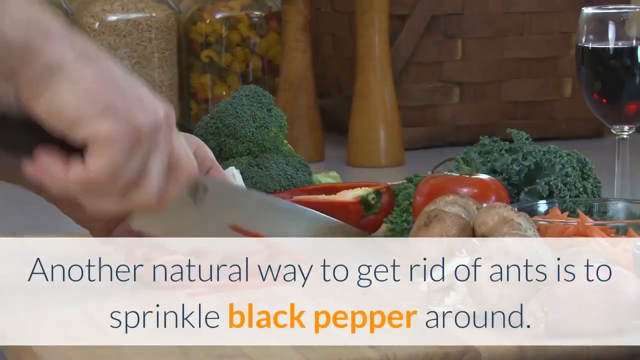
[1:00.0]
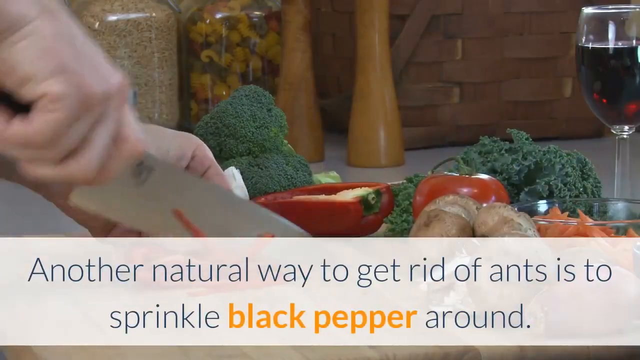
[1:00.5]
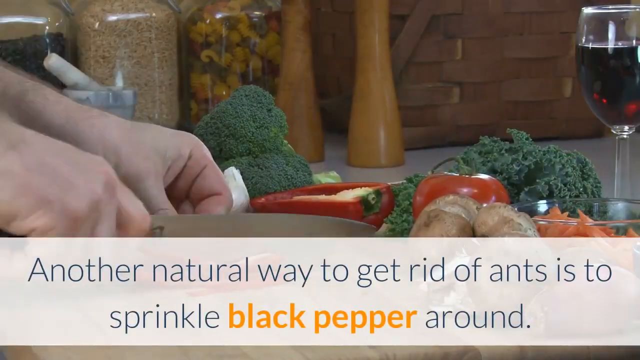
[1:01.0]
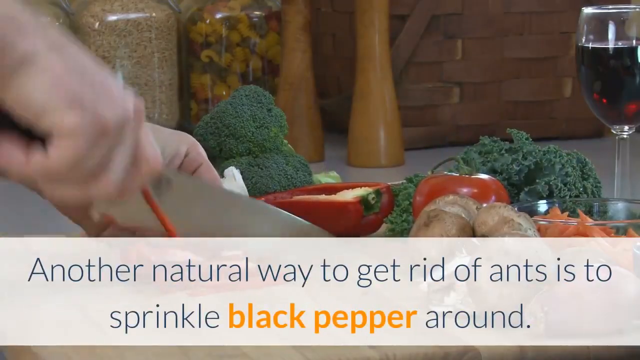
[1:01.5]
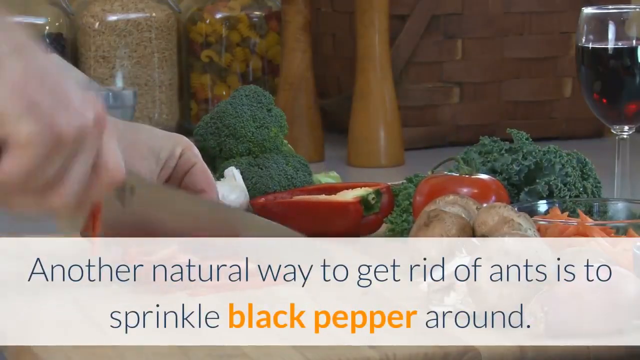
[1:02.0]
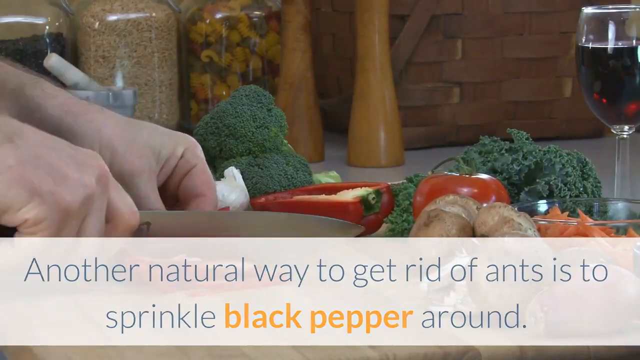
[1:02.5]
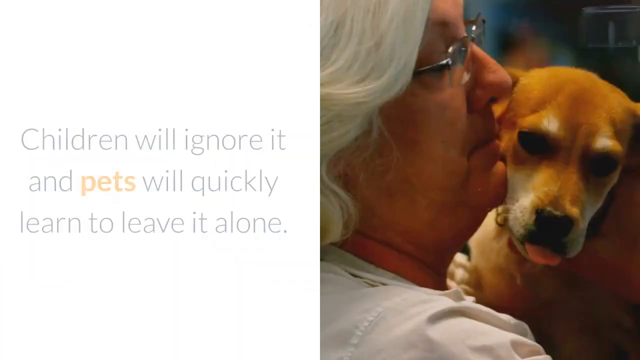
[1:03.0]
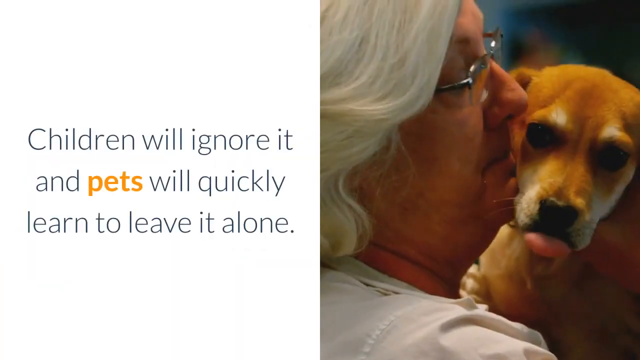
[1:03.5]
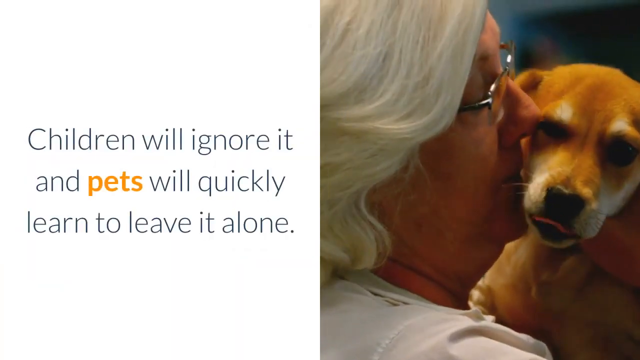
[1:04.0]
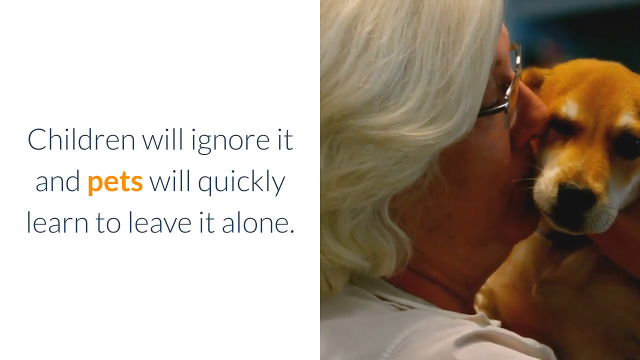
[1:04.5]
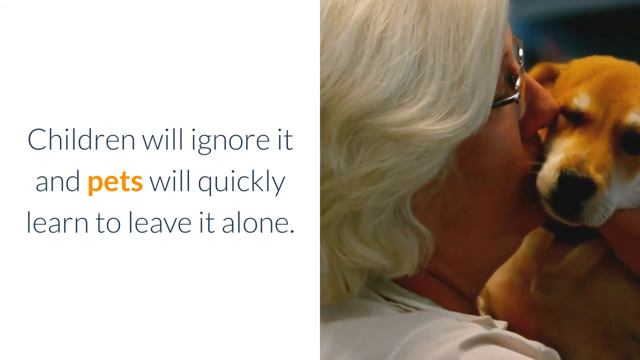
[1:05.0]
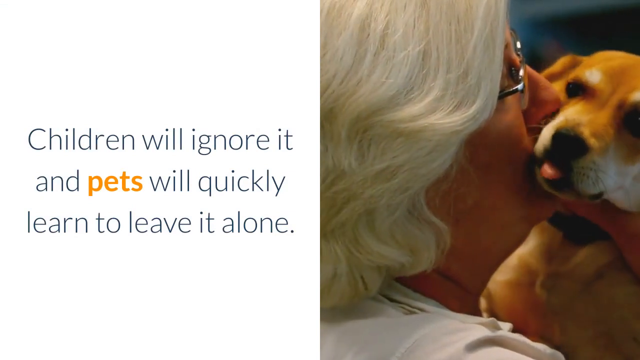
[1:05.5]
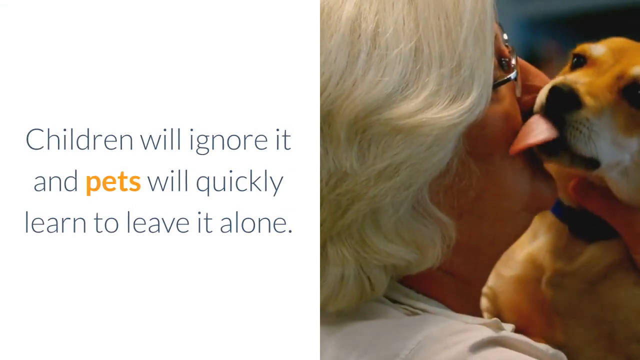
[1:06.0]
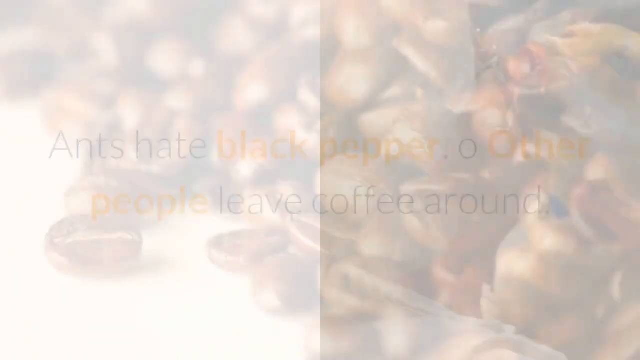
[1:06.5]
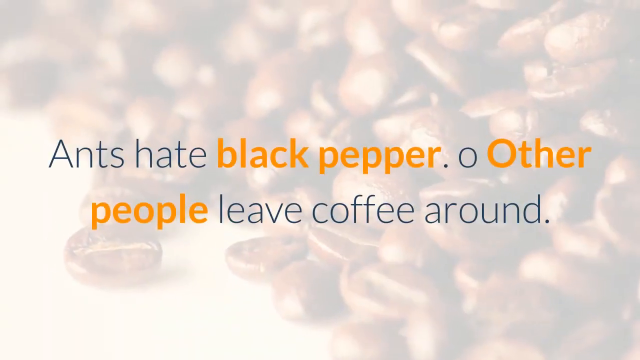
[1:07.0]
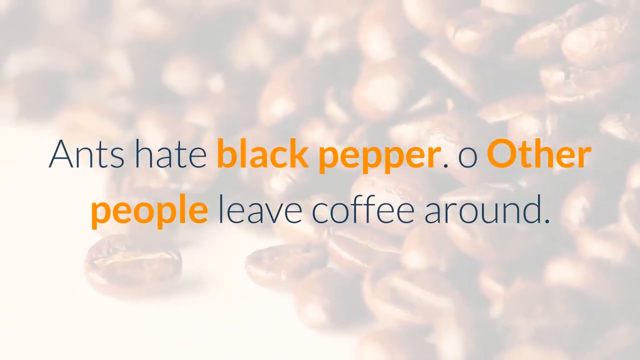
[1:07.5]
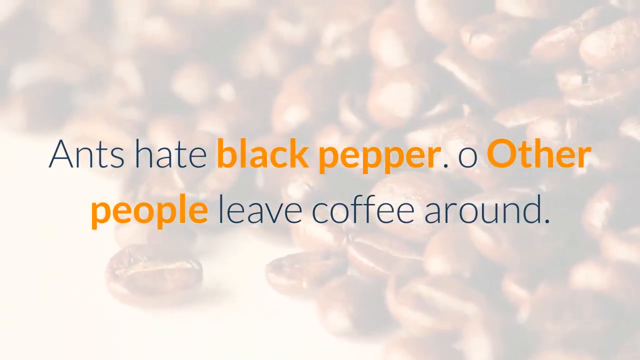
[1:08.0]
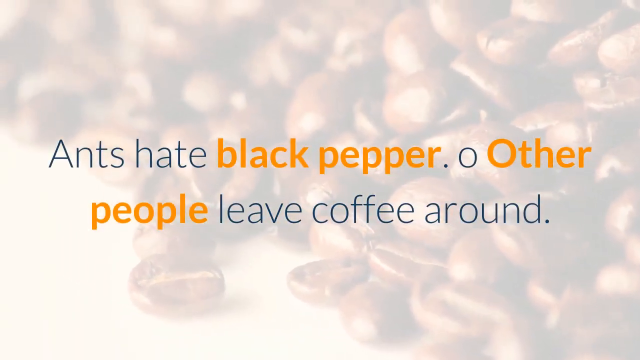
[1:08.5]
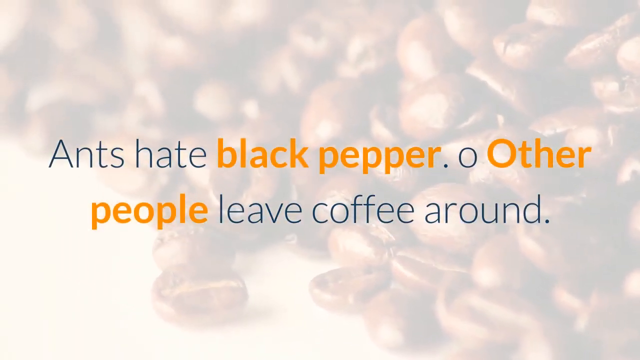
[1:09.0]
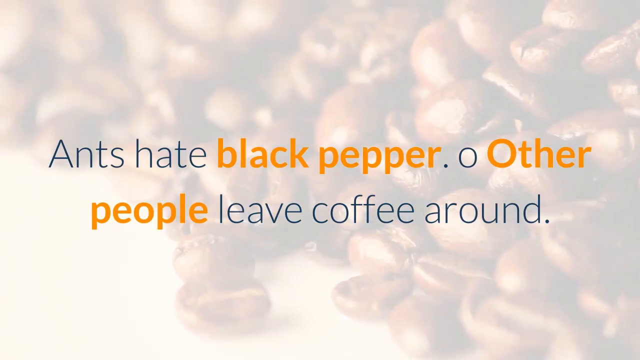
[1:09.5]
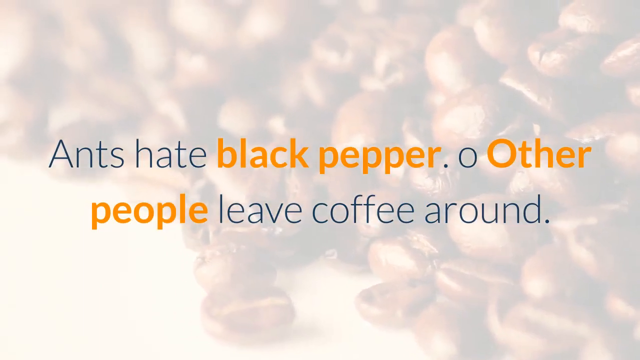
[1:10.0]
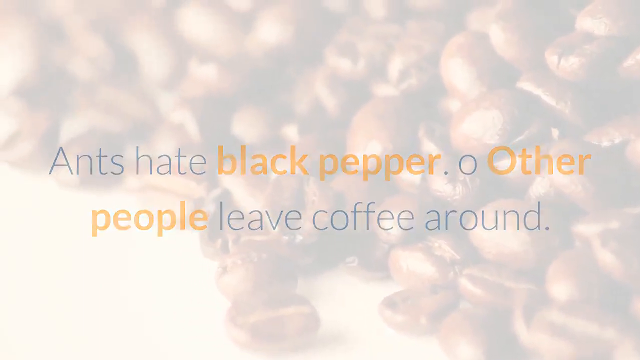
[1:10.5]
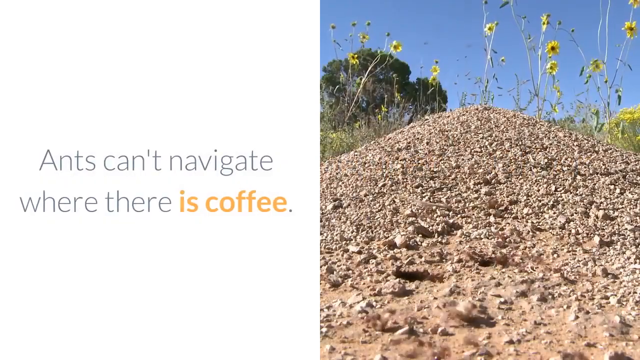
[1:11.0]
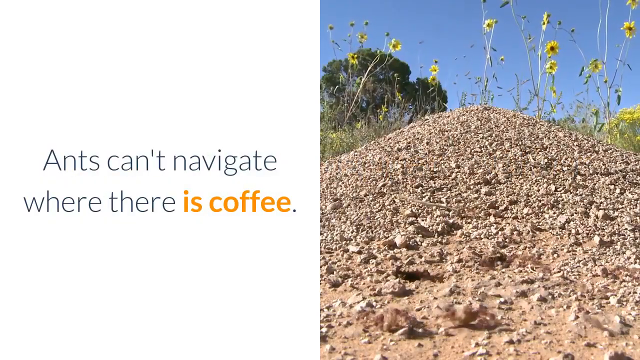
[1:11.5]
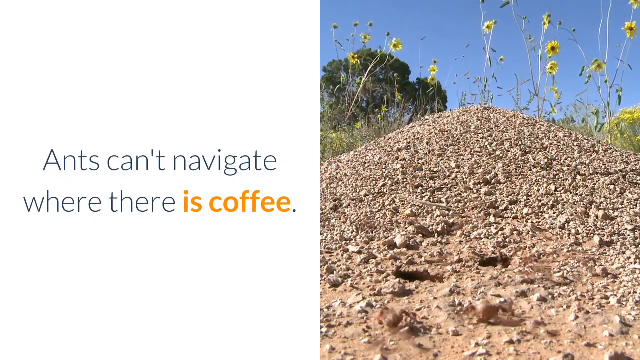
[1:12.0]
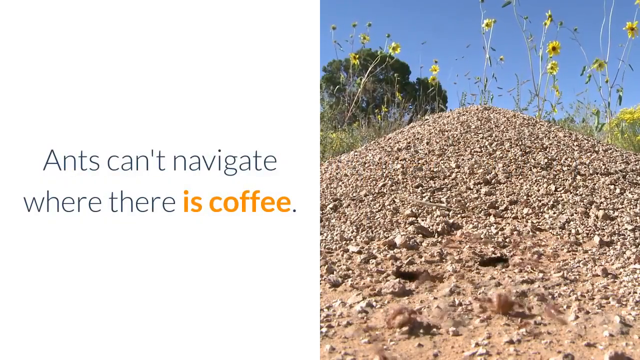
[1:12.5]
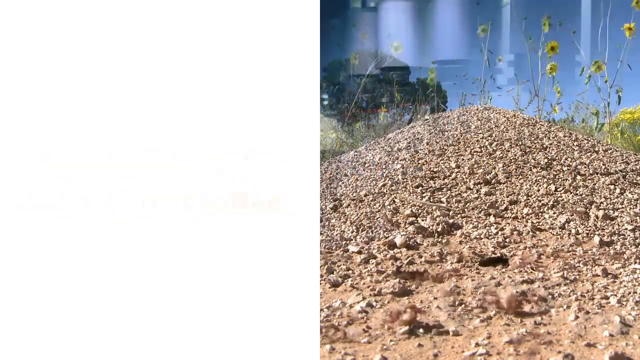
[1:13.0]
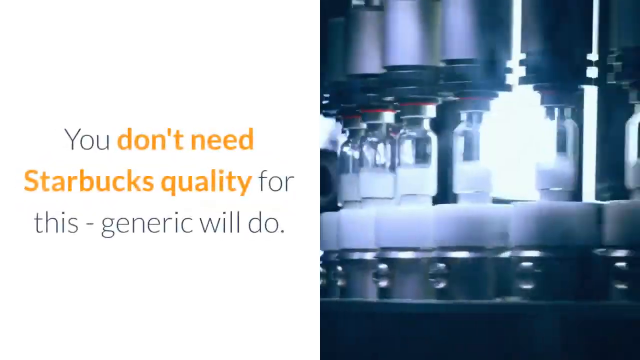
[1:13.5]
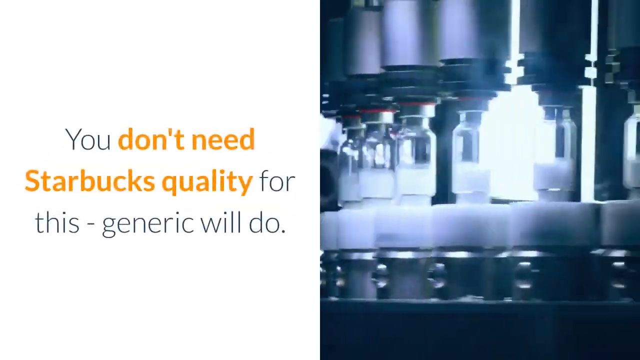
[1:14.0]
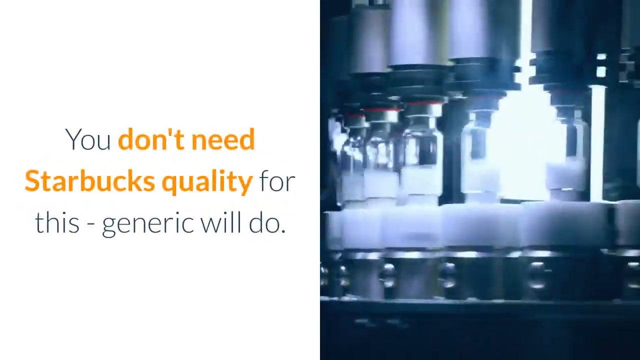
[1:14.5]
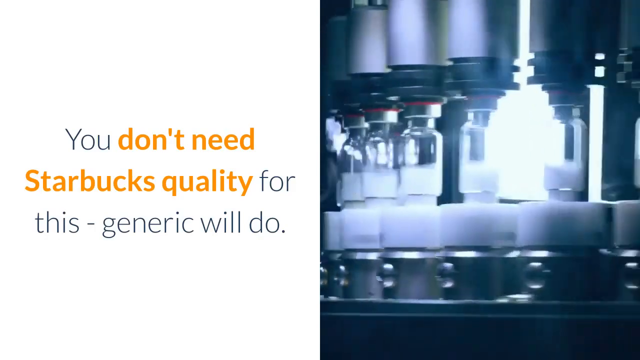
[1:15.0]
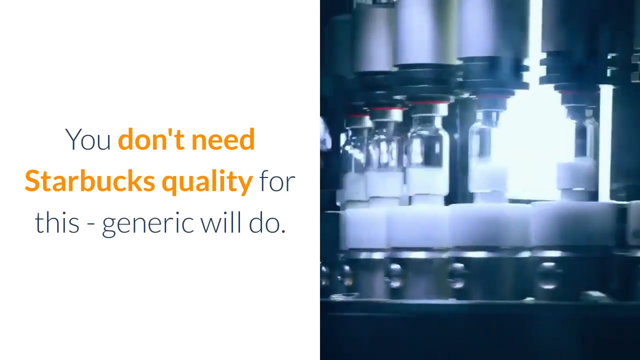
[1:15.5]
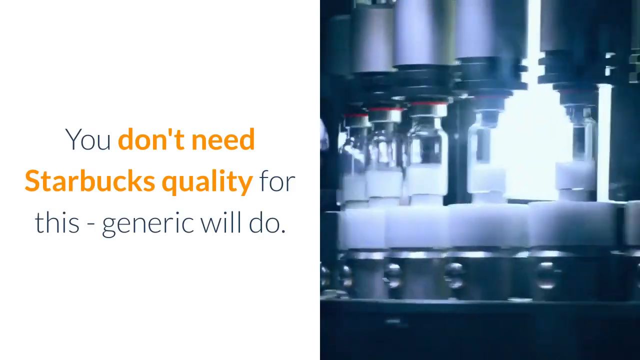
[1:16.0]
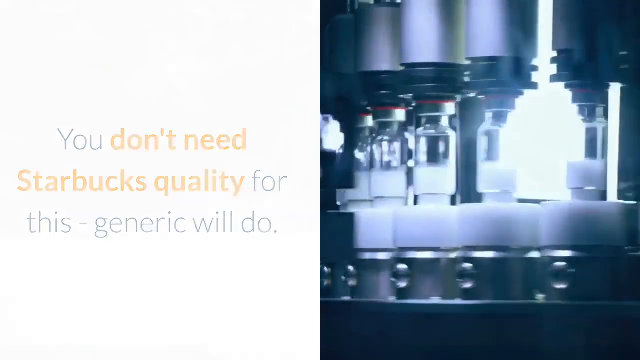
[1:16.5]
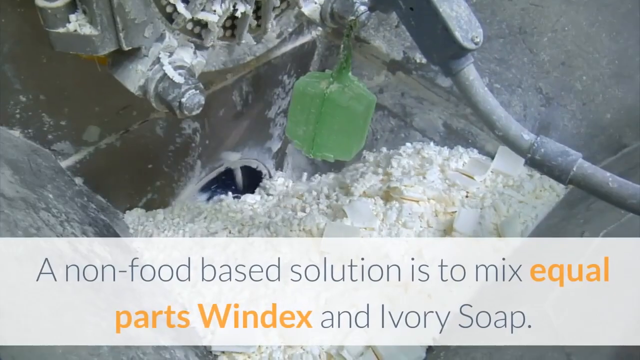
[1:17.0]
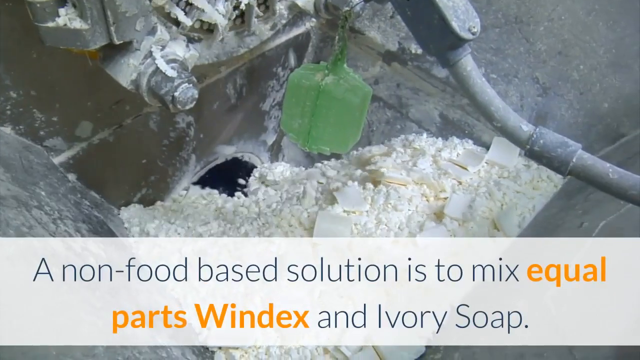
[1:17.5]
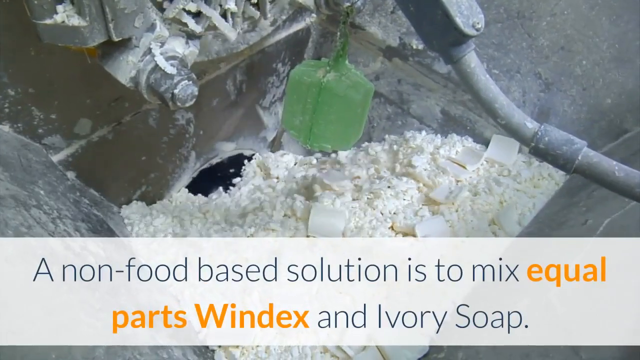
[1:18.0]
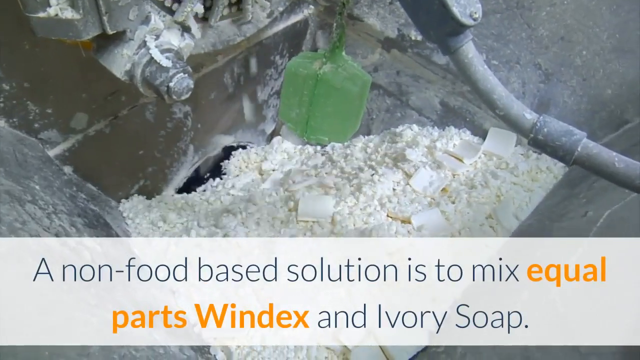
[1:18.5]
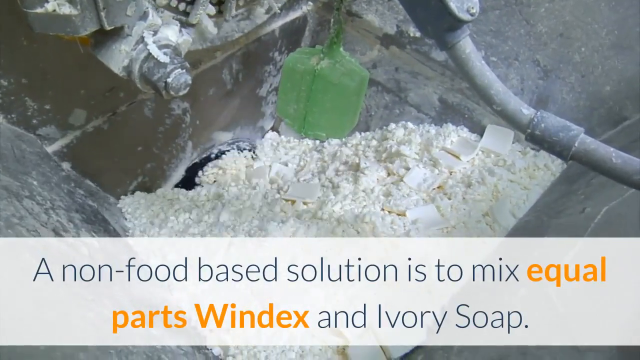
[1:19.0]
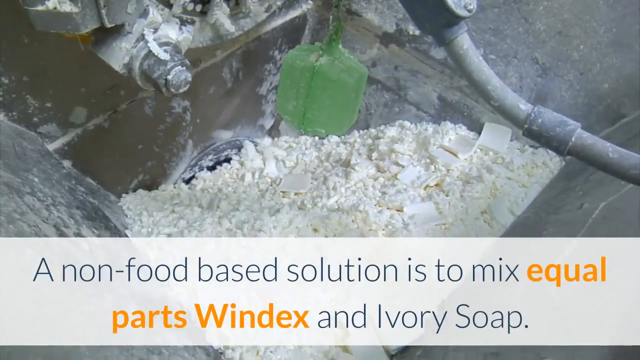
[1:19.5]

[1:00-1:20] Someone chops vegetables, and the text apparently reads "another way to get rid of ants is to sprinkle black pepper around them." At the top, somebody chops some peppers. The next scene has a white background on the left with text mentioning children and pets, and on the right an older lady with white hair holds a dog that is not a little dog. Another scene has what looks like a white background and some coffee beans, with text reading "ants hate black pepper. Other people leave coffee around." A little coffee is in the background. Text on the left reads "ants can't navigate where there is coffee," and on the right there is what looks like a mound of coffee. Text on the left then reads "you don't need Starbucks quality for this generic will do," followed by what looks like a generic drug being produced. Next is a scene with something like a sifter and text reading "a non-food based solution that's mixed equal parts of Windex and ivory soap," as what looks like a big mixer has stuff poured in and mixed together.